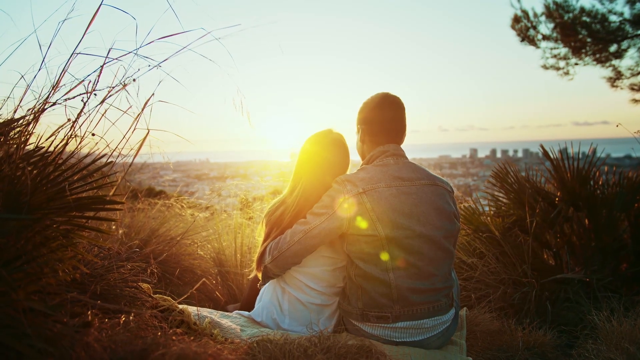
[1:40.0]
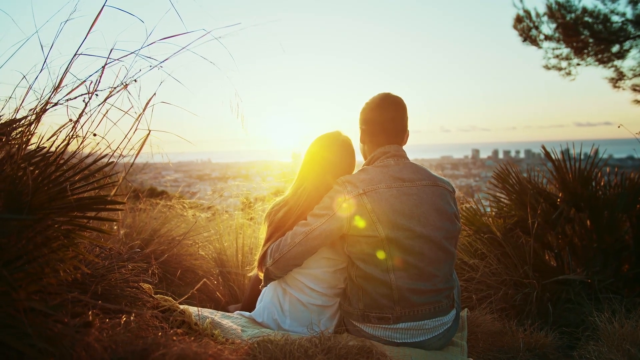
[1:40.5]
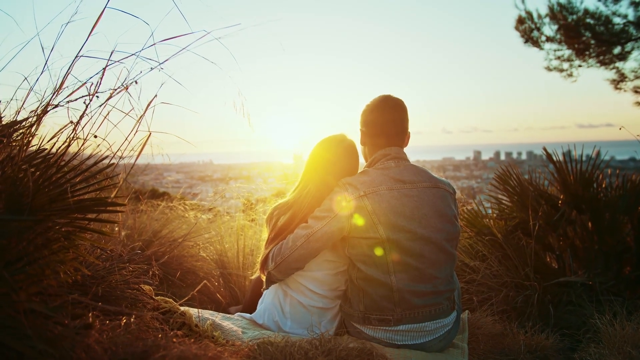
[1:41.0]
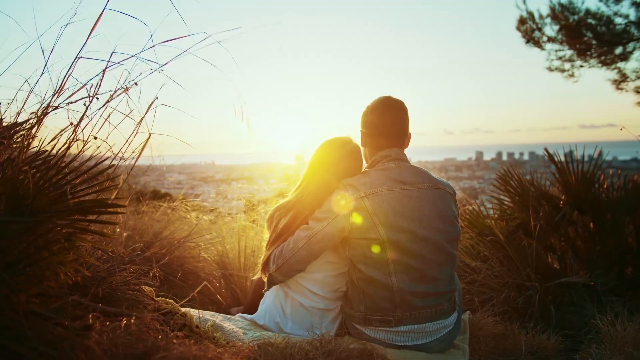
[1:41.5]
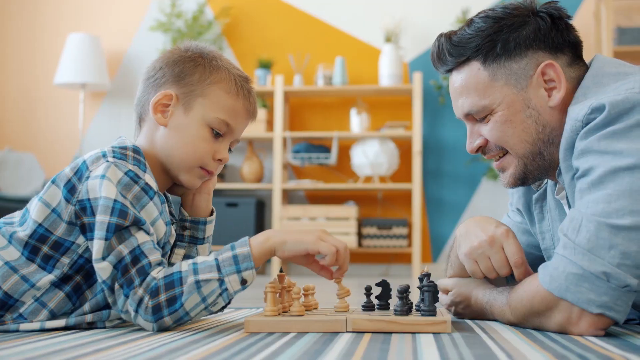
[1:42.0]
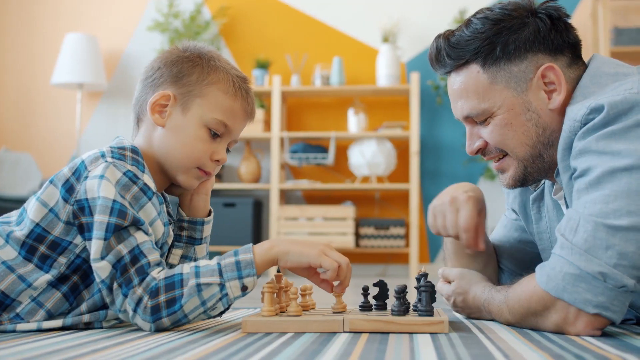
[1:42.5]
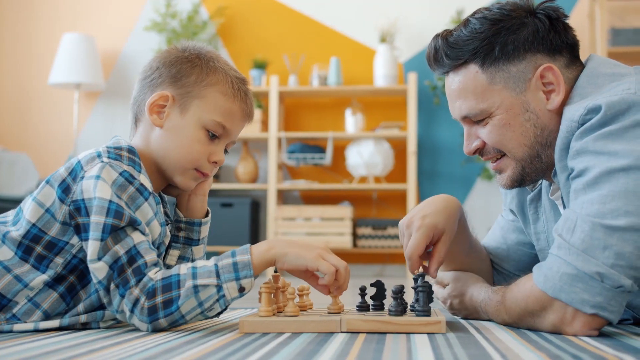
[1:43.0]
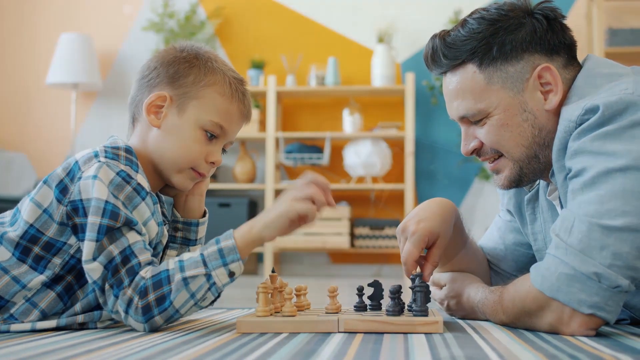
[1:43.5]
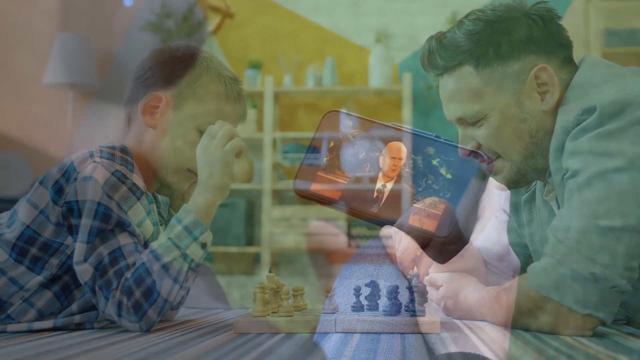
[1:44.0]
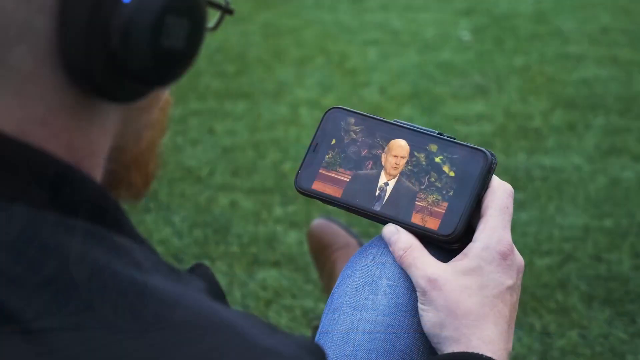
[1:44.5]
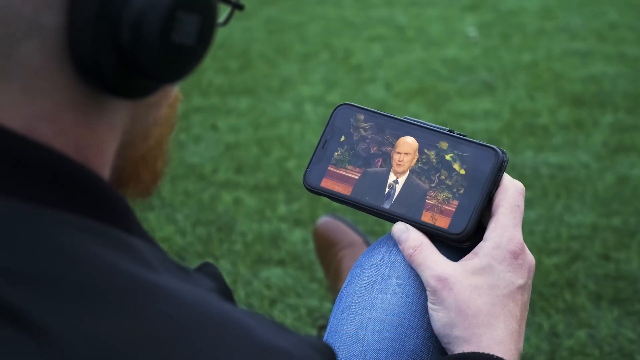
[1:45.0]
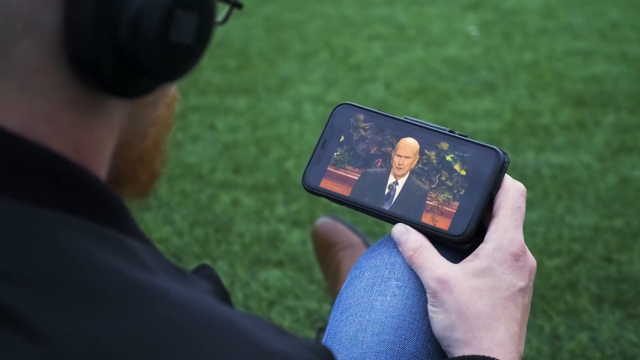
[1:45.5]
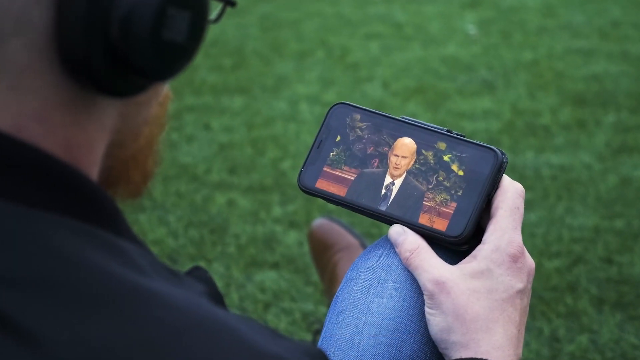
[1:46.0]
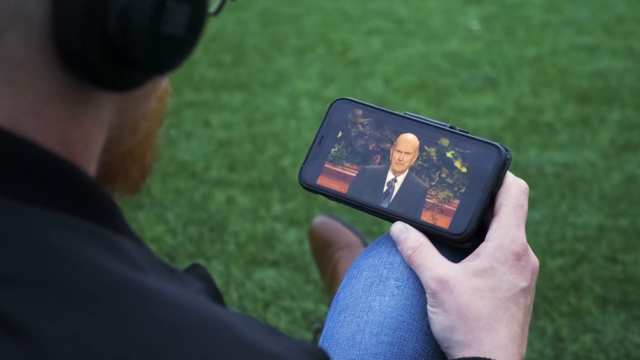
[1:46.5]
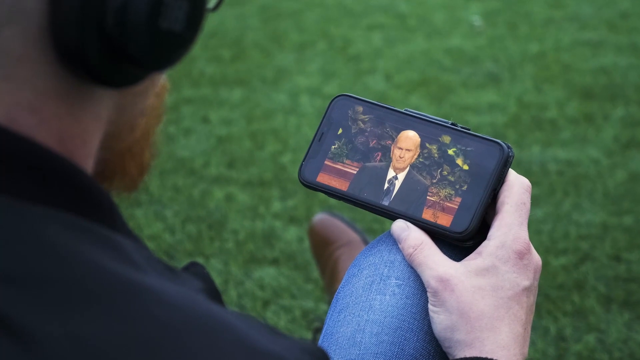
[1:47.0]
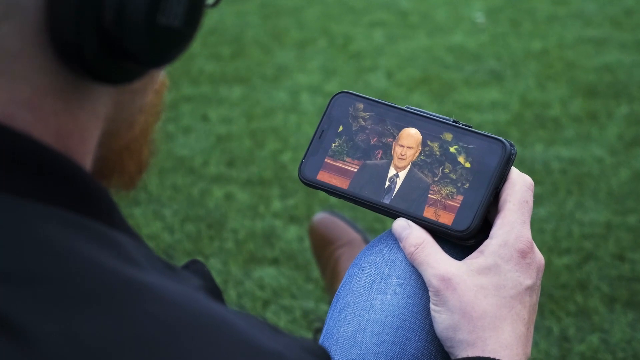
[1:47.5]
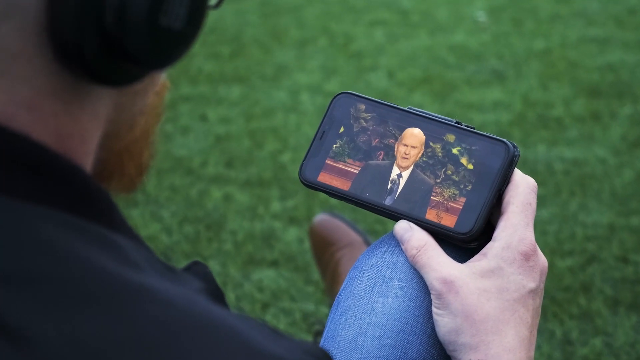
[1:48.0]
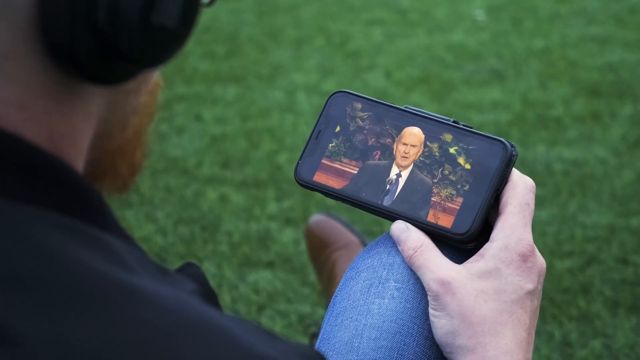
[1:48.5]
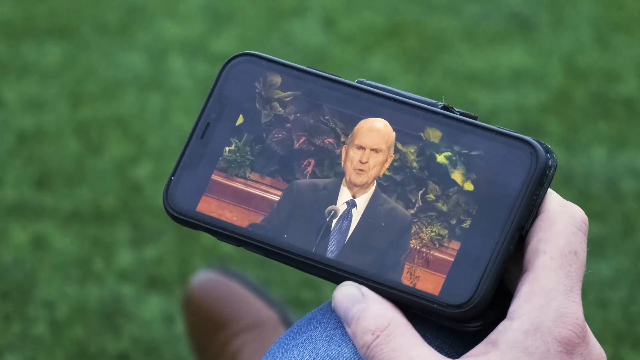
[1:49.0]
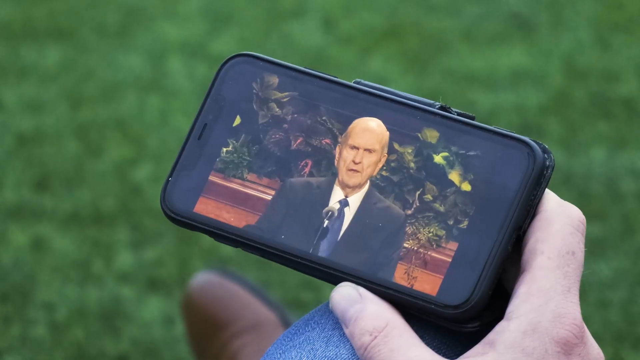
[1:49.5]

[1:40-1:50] The text "Voice of Dieter F. Uchtdorf, Quorum of the Twelve Apostles" appears. A couple looks at either the sunrise or the sunset; the man's arm goes across the back and under the woman's left hand, and she has long hair. A man and a boy lie on their chests on the floor playing chess. A very pale man with a red beard, glasses and headphones, wearing blue jeans and boots, looks at his phone, where it looks like a minister is talking.